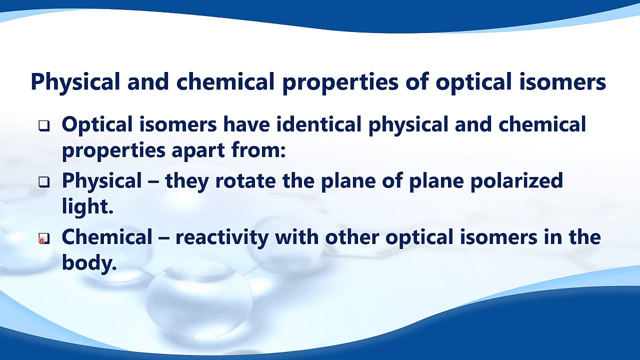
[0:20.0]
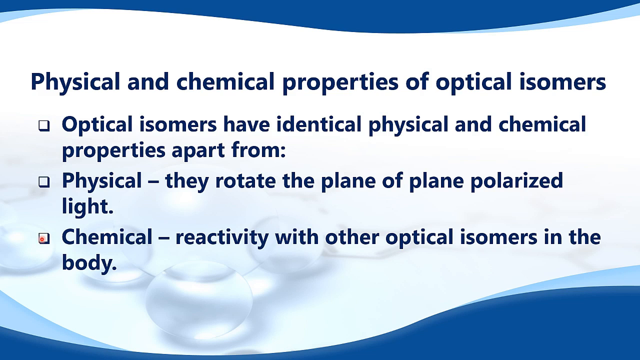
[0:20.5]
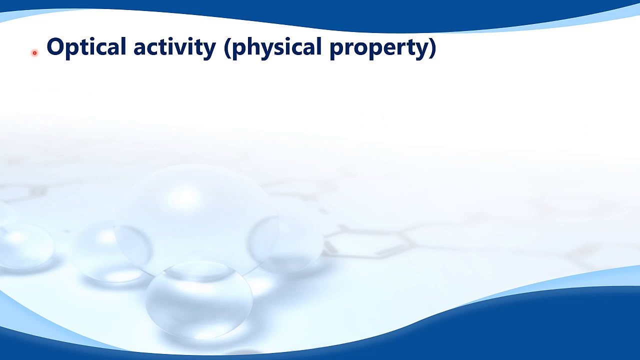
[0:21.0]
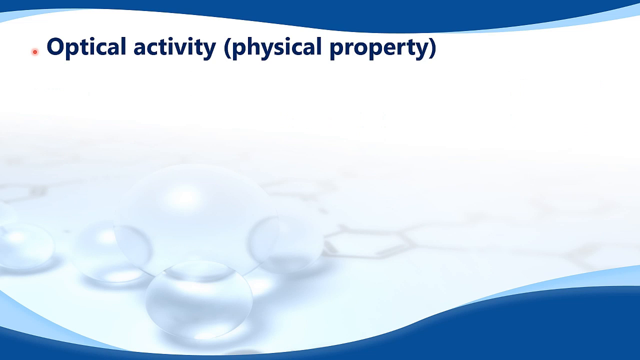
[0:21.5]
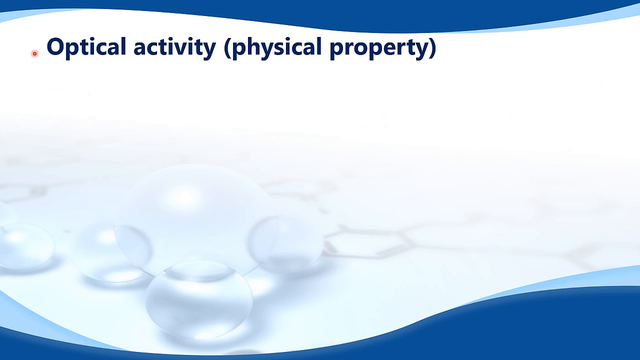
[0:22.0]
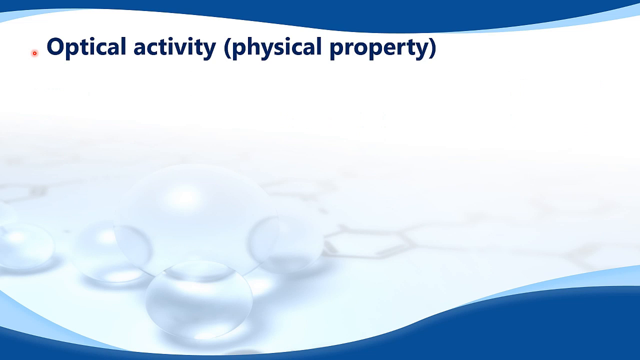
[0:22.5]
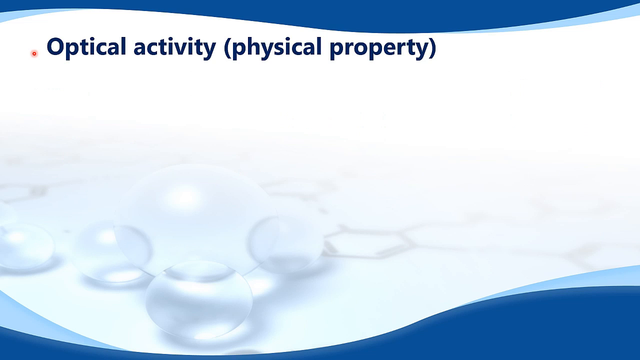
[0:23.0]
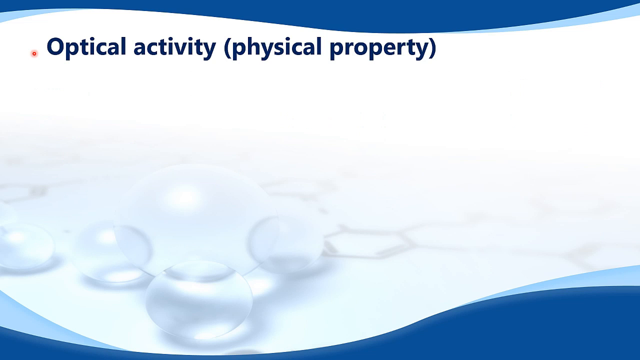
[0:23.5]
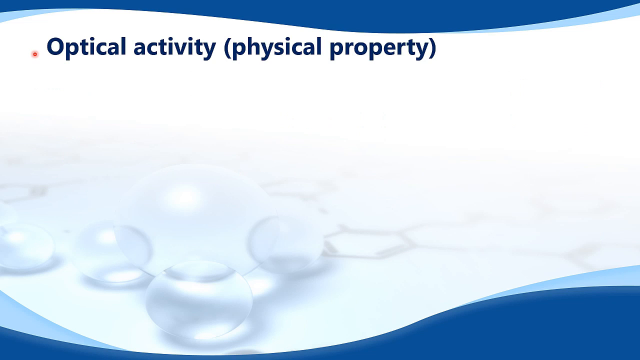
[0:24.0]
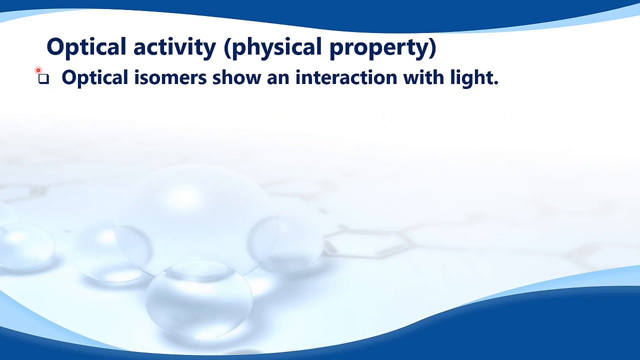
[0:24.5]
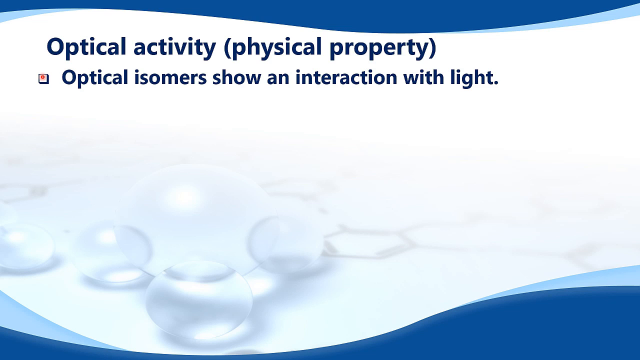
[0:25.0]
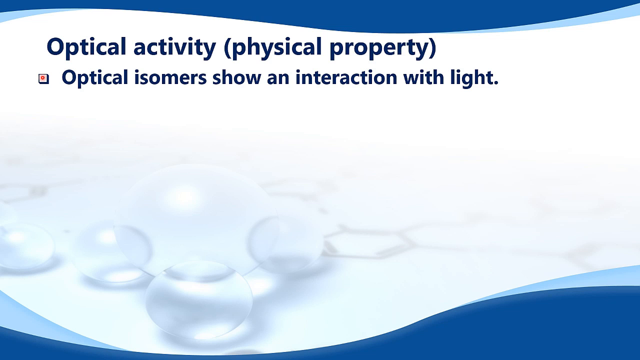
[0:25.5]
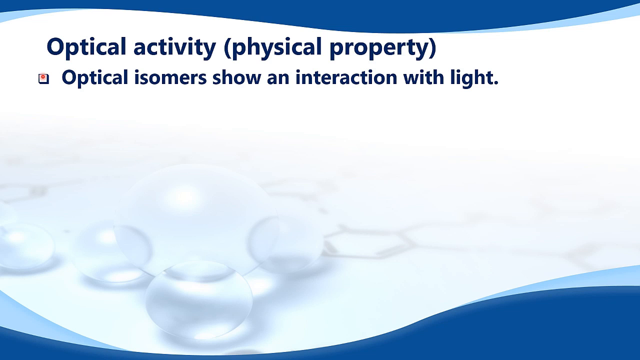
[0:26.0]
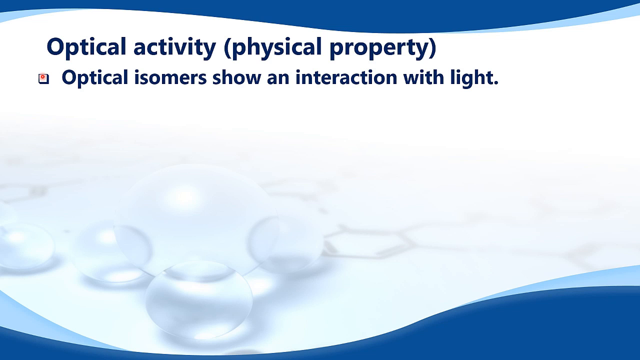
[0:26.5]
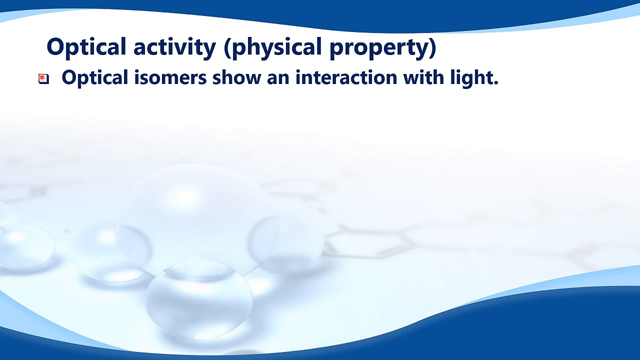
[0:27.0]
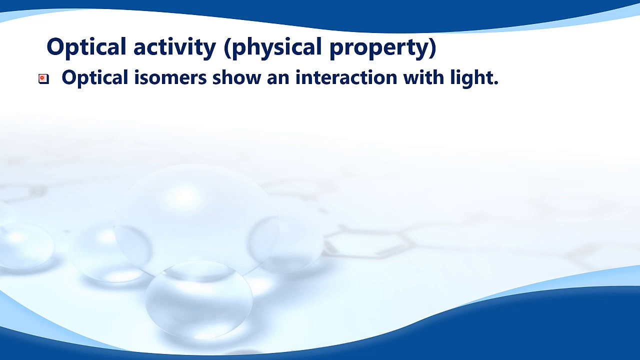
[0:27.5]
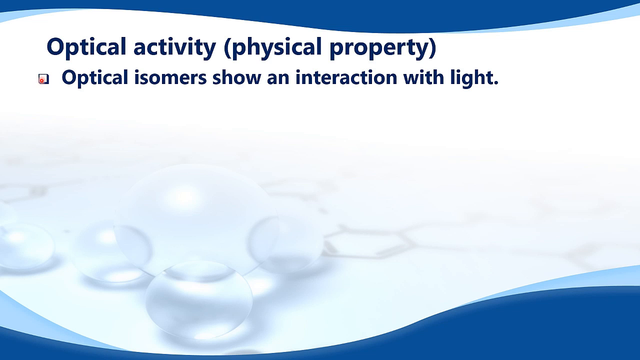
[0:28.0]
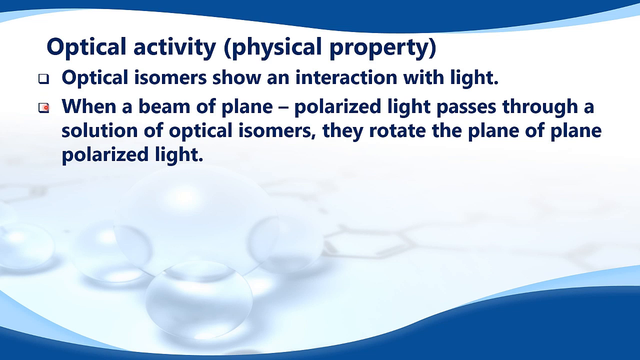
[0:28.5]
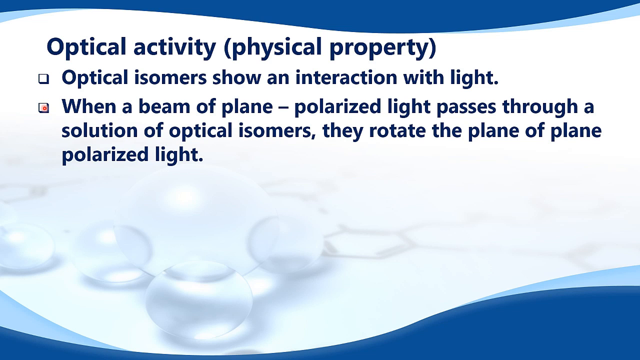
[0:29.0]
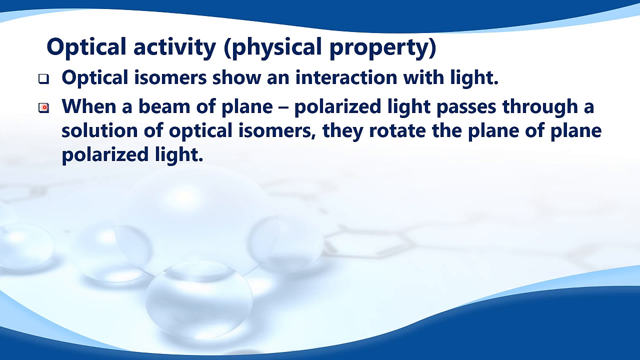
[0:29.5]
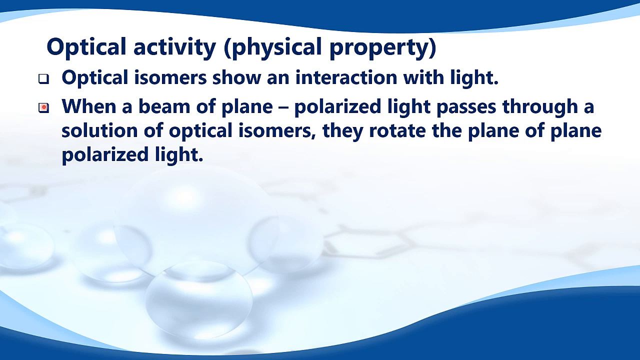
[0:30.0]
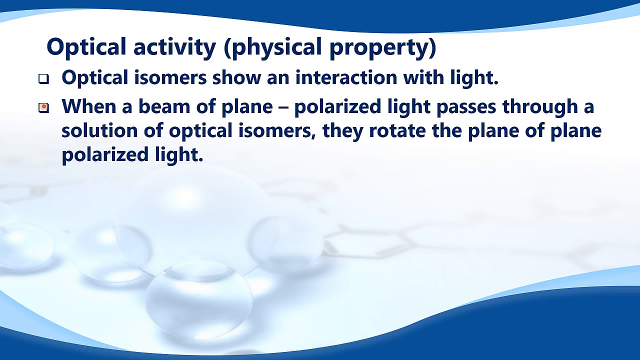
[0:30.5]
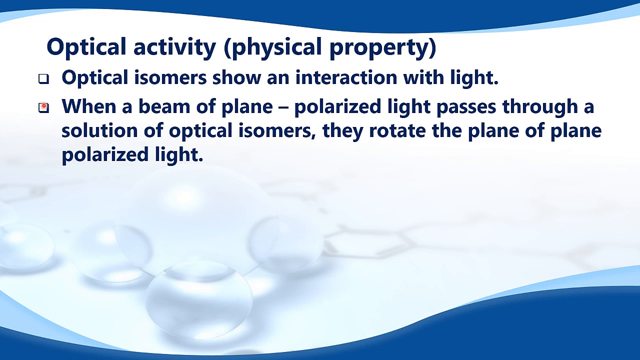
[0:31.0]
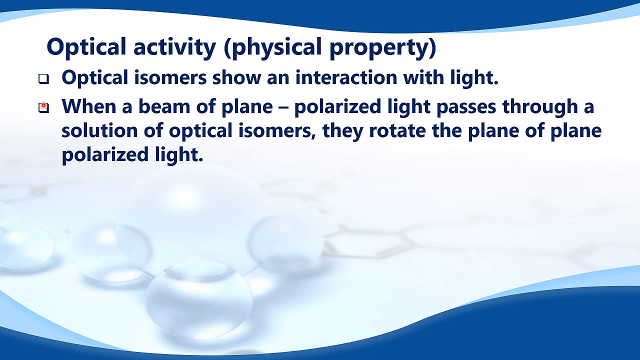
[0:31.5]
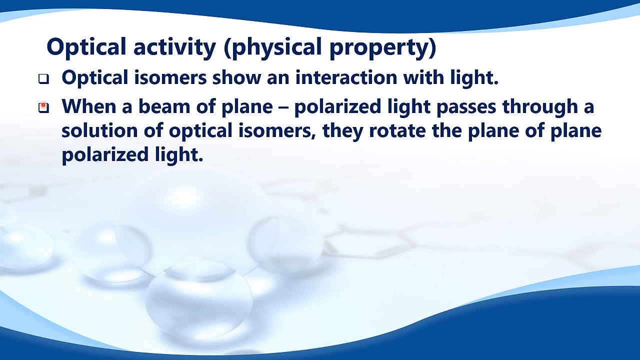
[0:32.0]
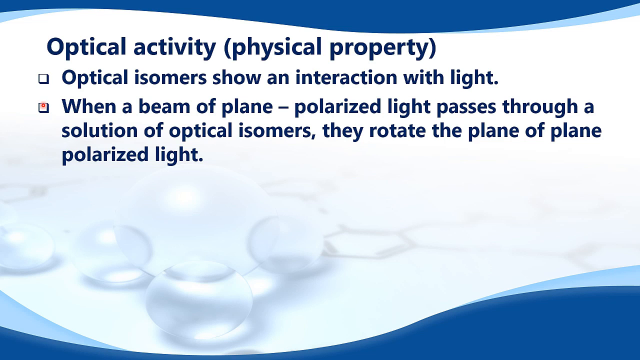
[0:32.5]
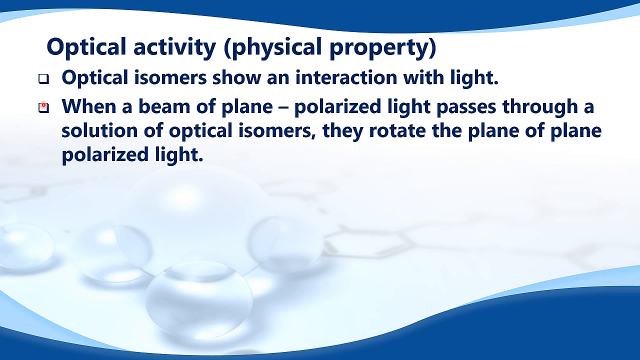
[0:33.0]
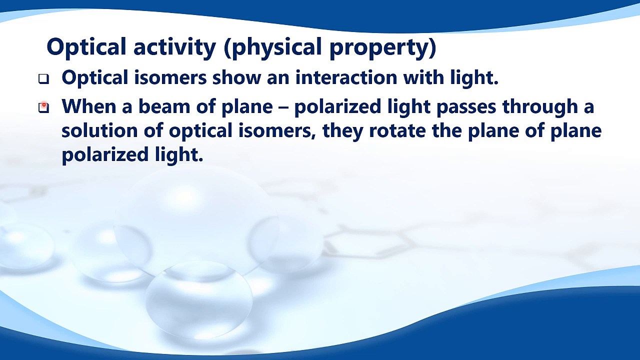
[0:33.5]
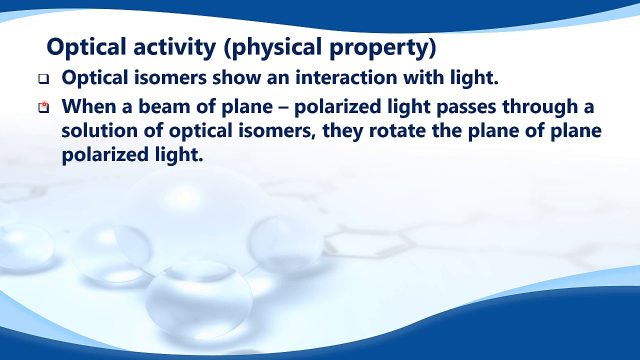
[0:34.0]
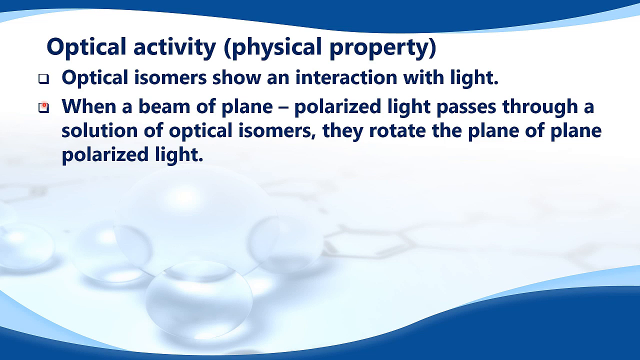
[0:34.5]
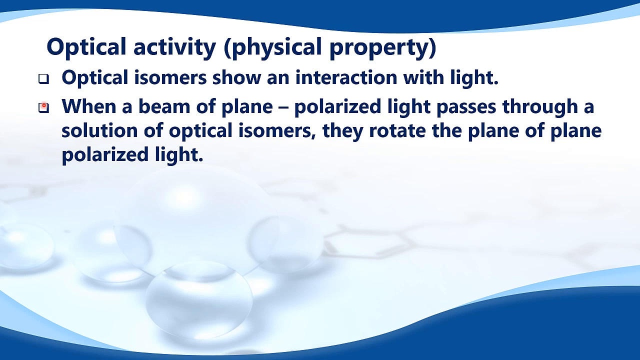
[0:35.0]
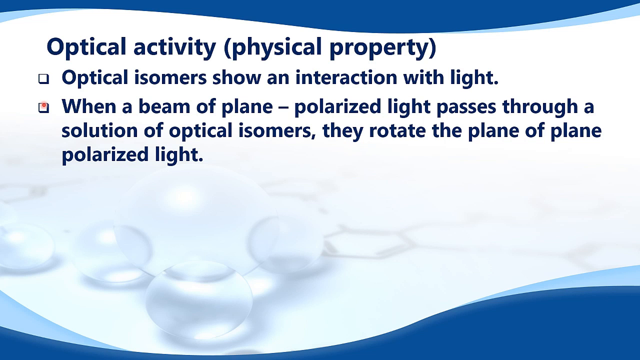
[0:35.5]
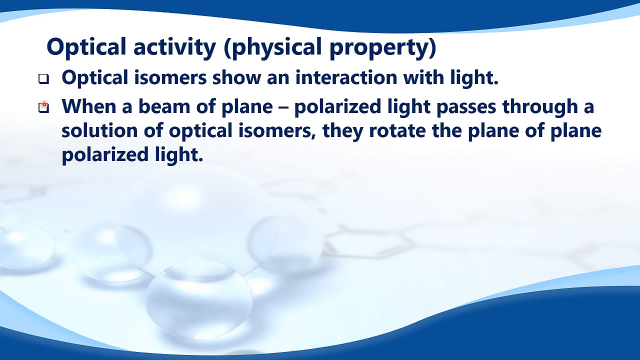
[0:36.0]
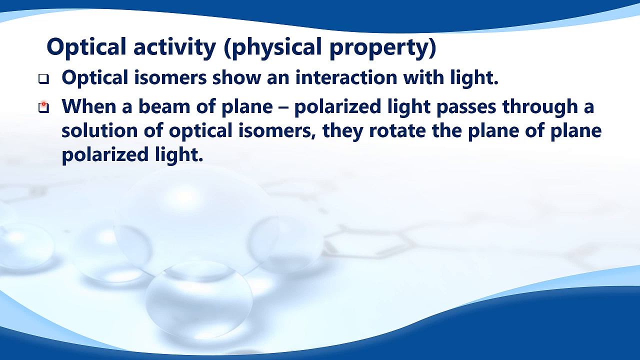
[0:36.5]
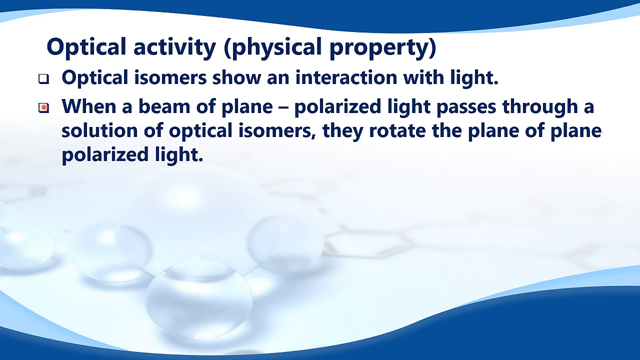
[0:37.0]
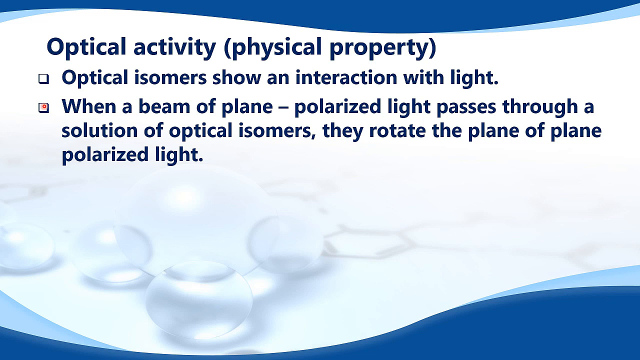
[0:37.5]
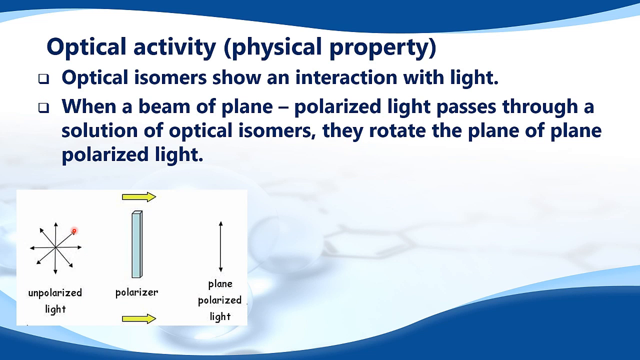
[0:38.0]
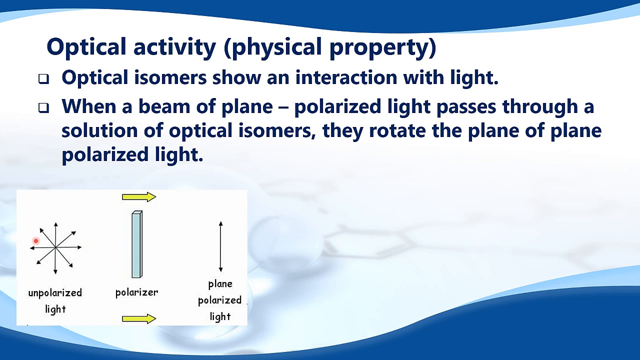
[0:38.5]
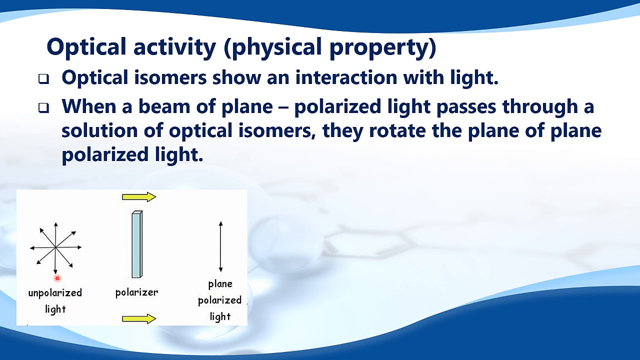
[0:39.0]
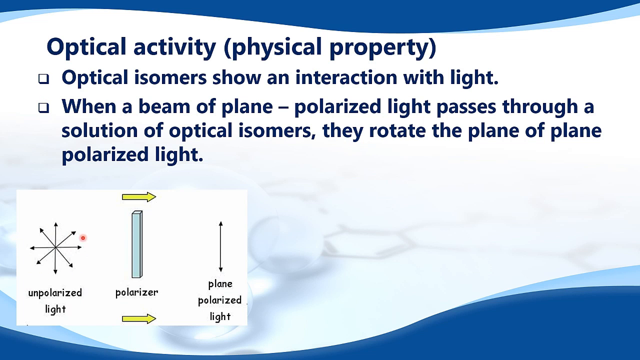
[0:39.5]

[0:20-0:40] The background stays the same, but all the text disappears and a new headline appears reading "optical activity" with "(physical property)" in parentheses, all in navy blue sans serif text. Two bullet points follow, again marked with squares instead of dots, and the orange dot appears to the left of each item as it appears. The first reads "optical isomers show an interaction with light". The second reads "when a beam of plane-polarized light passes through a solution of optical isomers, they rotate the plane of plane polarized light". An illustration then comes up at the lower left in a white box. At the top of it is a yellow arrow pointing to the right. There are arrows that form a cross and then go diagonal, almost like a star with little arrows pointing outward, labeled "unpolarized light". Next to it is a vertical bar in a kind of aqua blue, right underneath the yellow arrow, labeled "polarizer" underneath. To the right is a single black line with an arrow at the top and bottom, labeled underneath "plane polarized light". Another yellow arrow is underneath the word "polarizer".